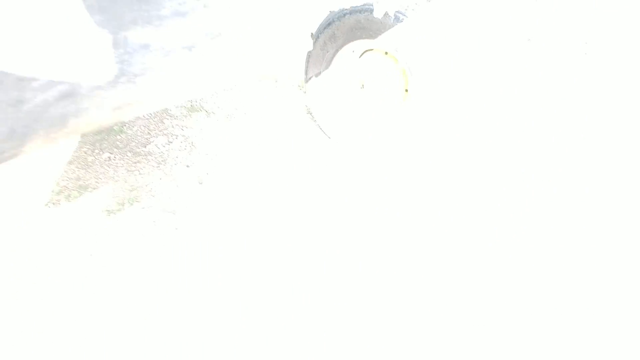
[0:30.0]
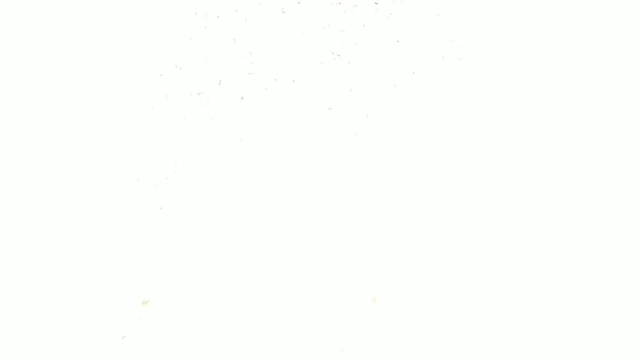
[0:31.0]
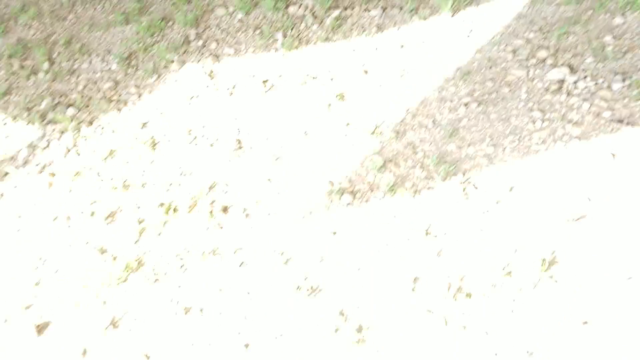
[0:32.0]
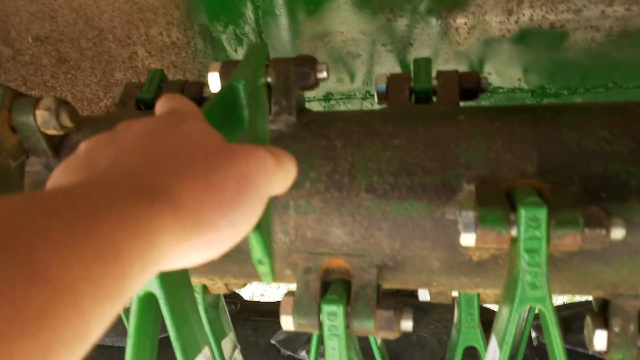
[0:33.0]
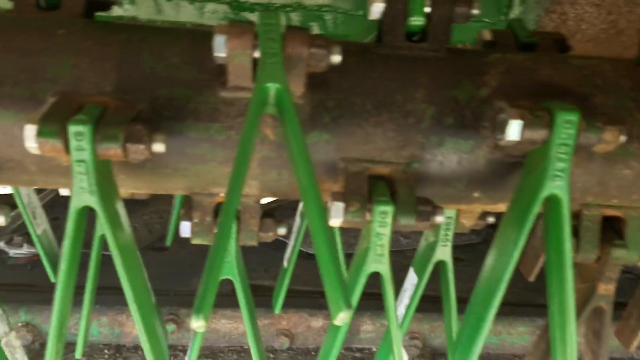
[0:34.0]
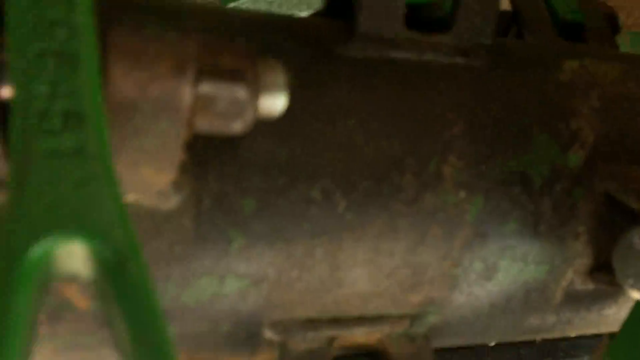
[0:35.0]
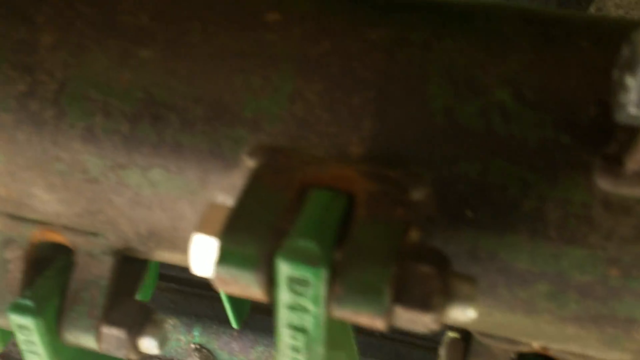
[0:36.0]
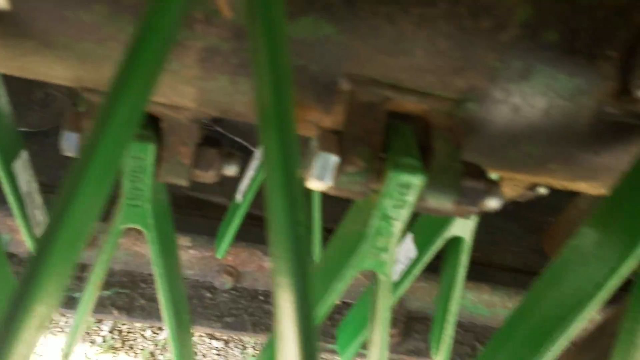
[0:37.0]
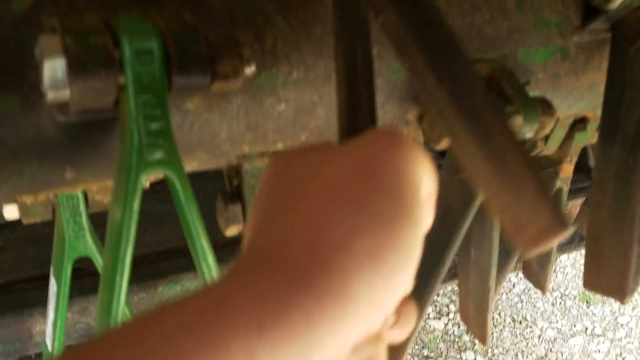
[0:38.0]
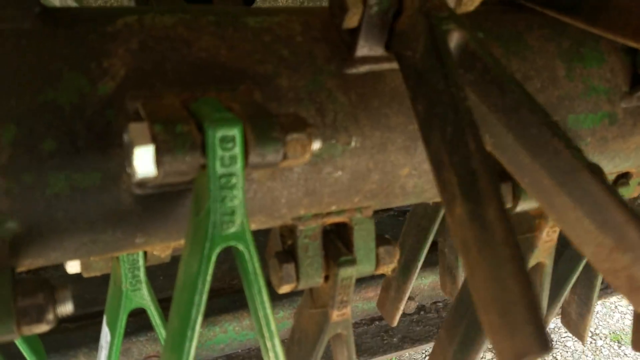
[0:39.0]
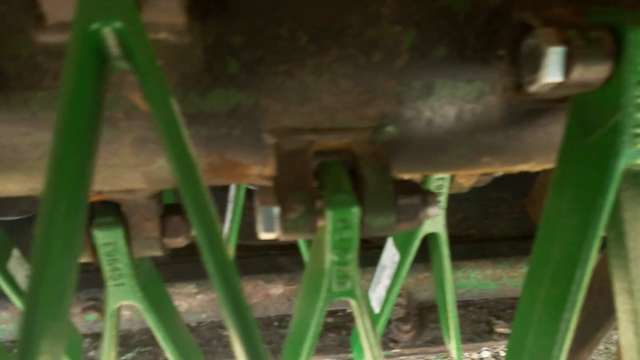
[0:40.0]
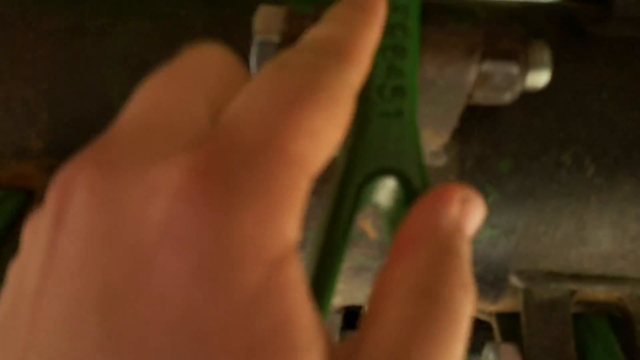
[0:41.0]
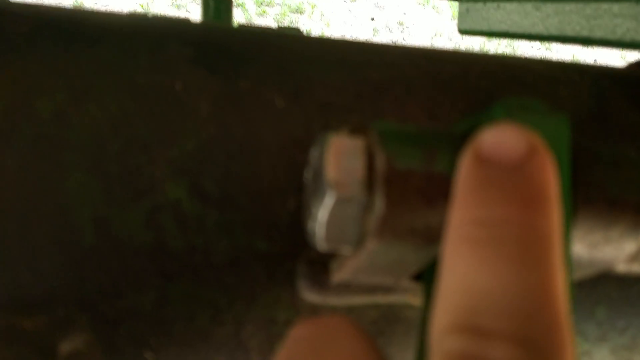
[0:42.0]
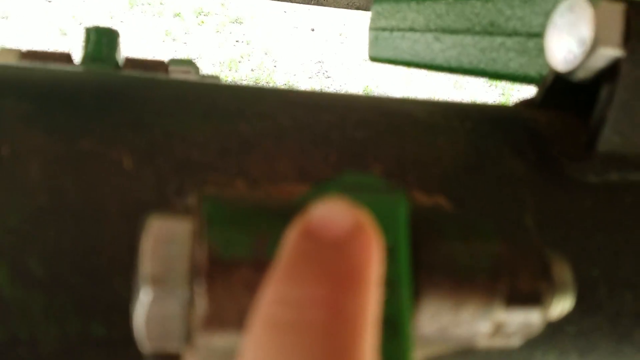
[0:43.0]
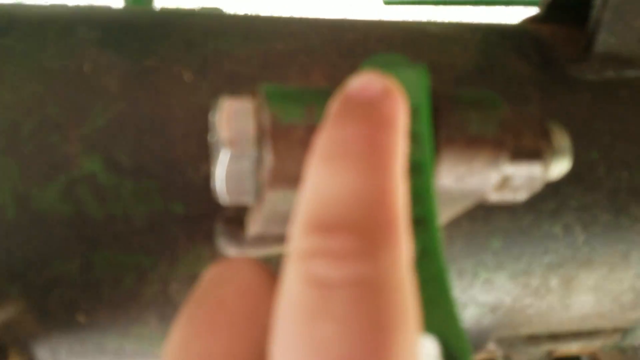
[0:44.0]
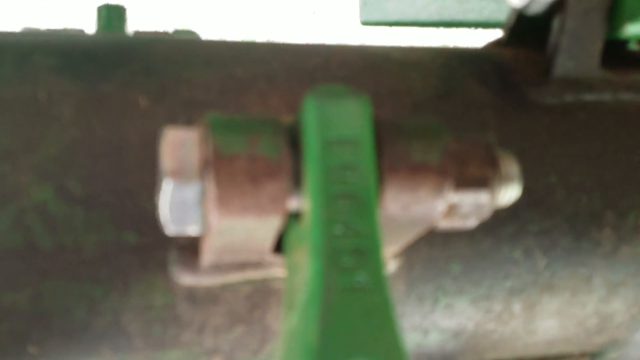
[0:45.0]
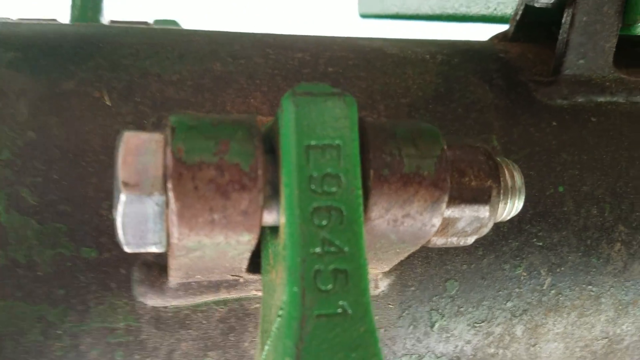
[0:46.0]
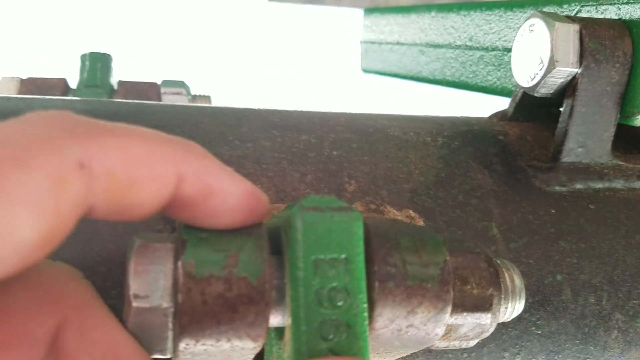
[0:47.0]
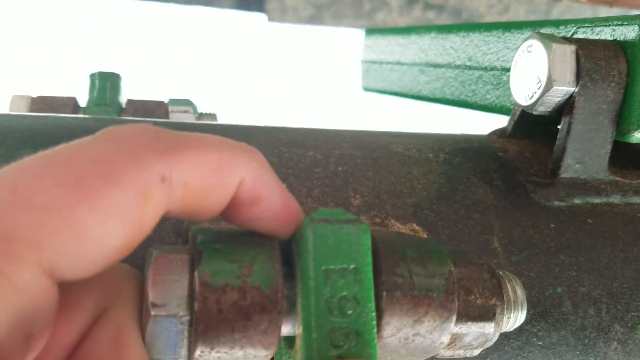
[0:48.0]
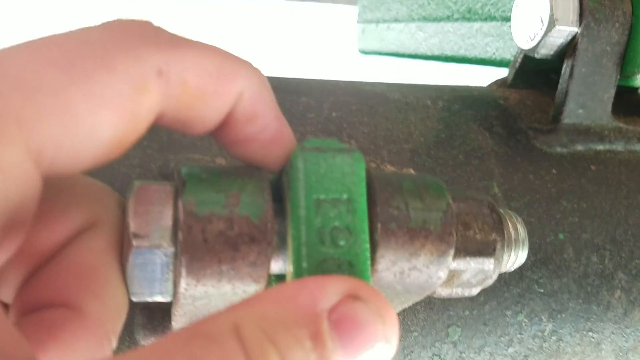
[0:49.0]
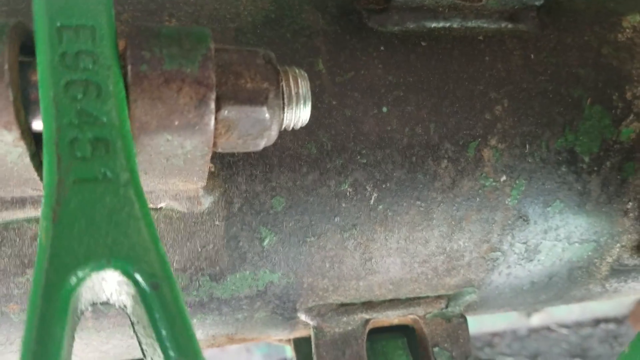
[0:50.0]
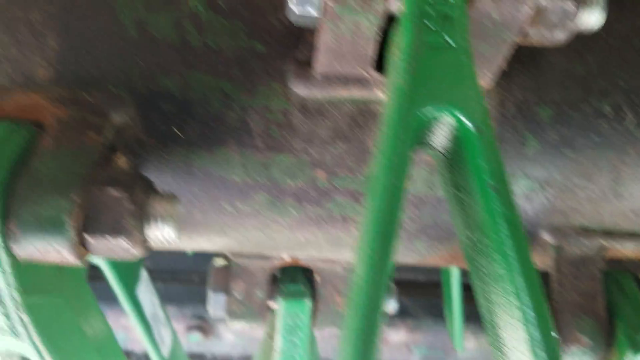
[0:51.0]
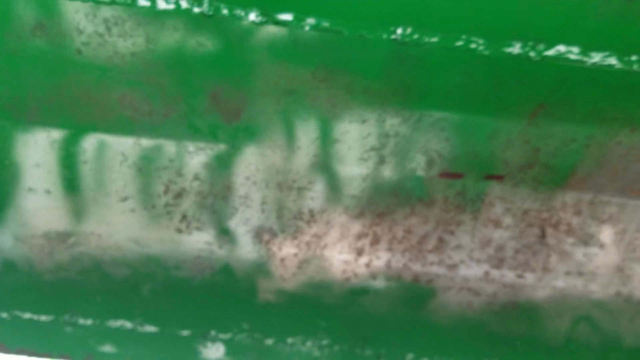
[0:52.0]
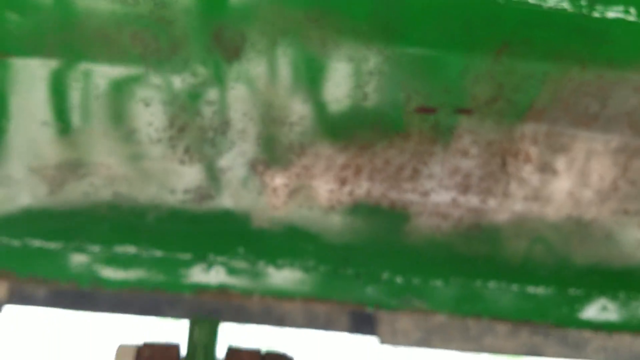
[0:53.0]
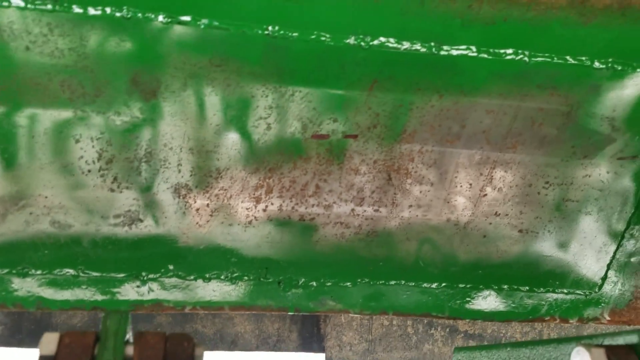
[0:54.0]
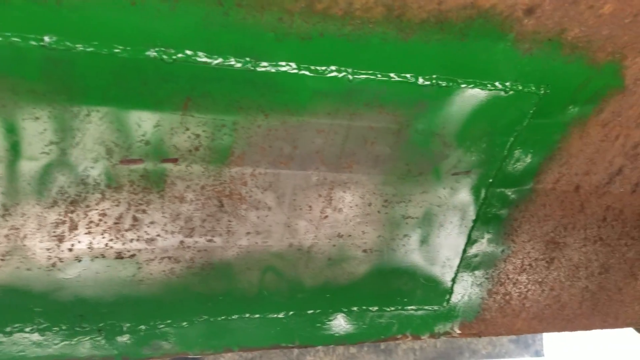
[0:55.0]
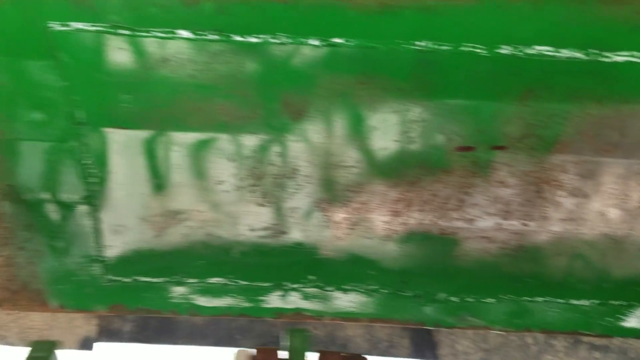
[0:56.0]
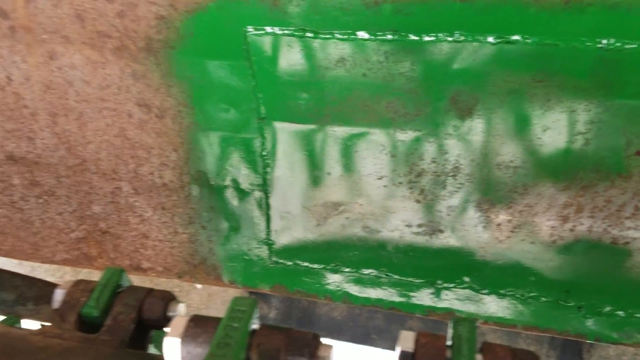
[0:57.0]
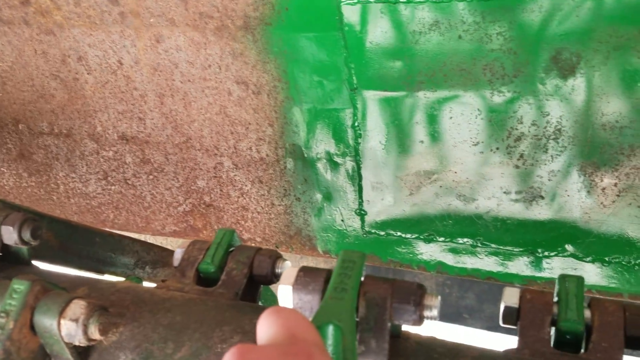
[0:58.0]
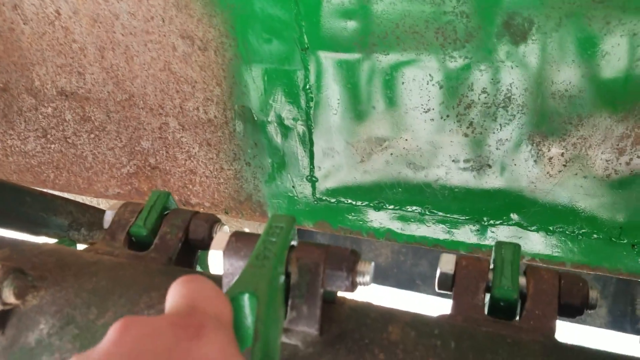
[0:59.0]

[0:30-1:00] A homemade video by a farmer shows a John Deere tractor and a combine at a farm. The picture becomes very bright and overexposed, and then the view goes underneath the combine, where he shows some of the parts. He lifts on one of them, which is painted green, pulls on it, and then pulls on something else, probably testing that everything is attached well. The parts are like little wishbone-shaped stems painted green, while the thing they are attached to is not green.